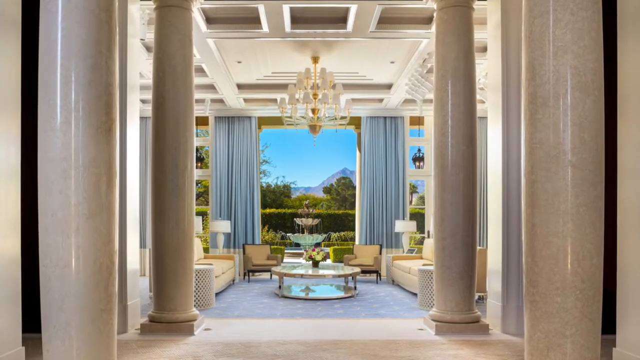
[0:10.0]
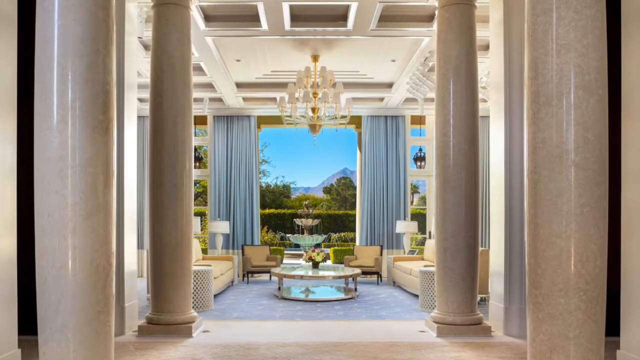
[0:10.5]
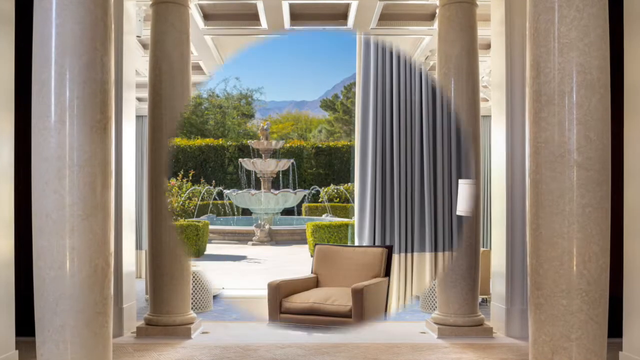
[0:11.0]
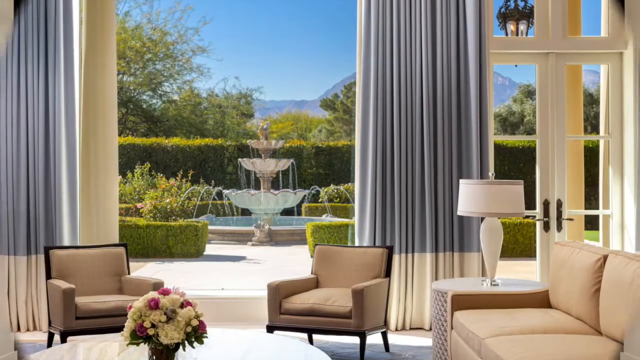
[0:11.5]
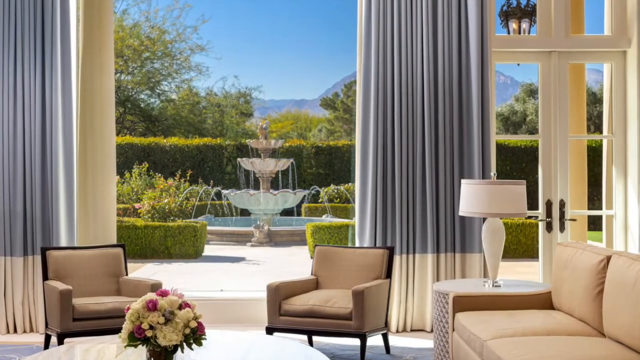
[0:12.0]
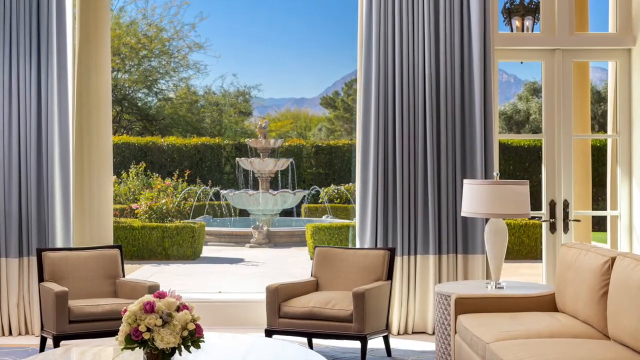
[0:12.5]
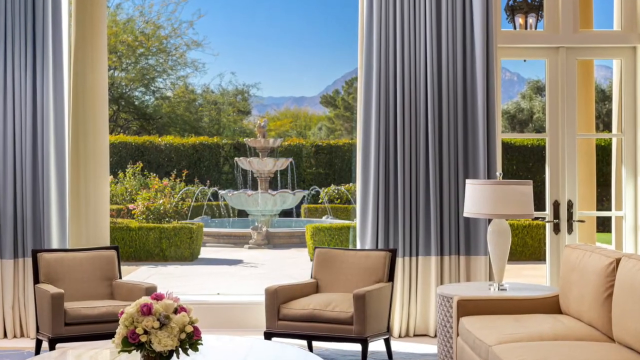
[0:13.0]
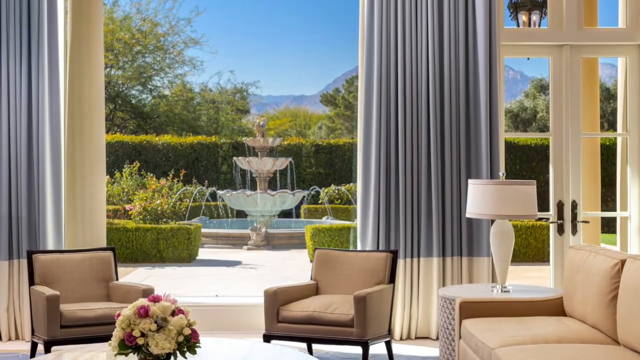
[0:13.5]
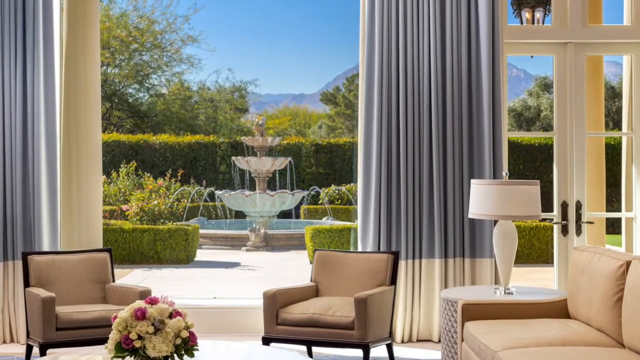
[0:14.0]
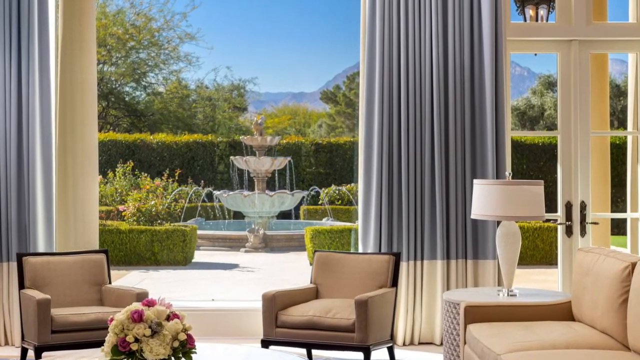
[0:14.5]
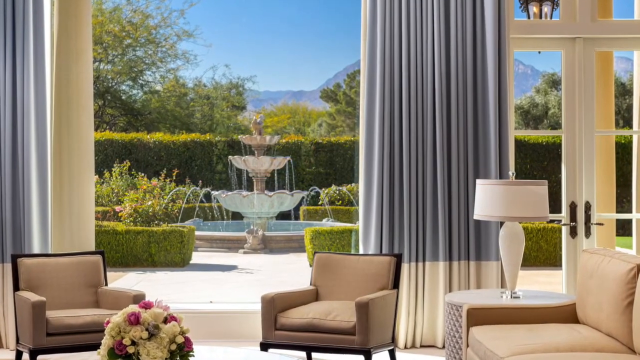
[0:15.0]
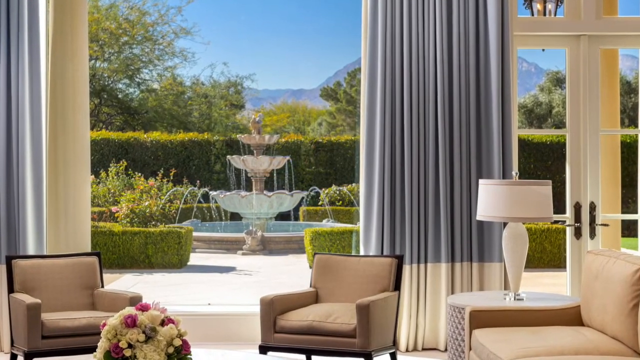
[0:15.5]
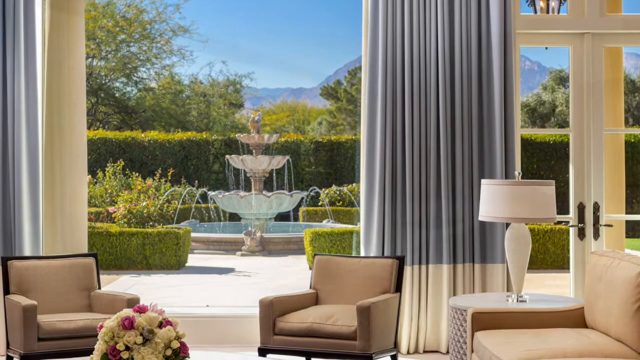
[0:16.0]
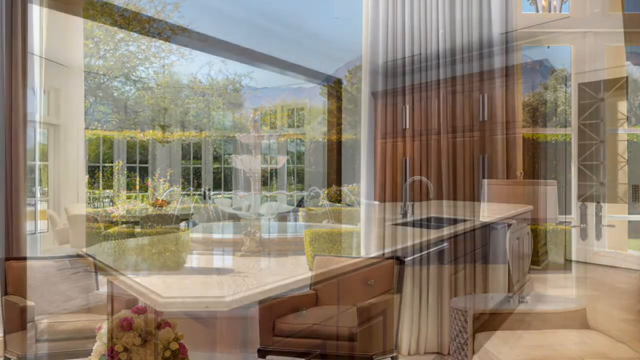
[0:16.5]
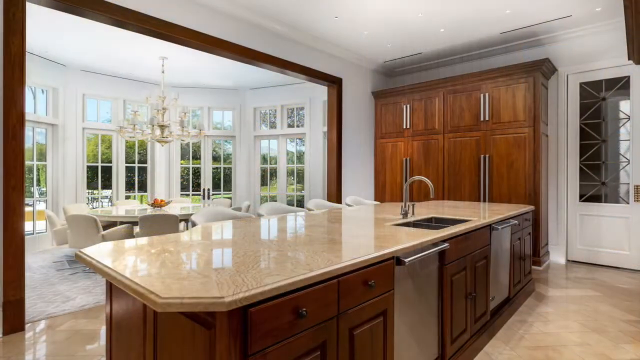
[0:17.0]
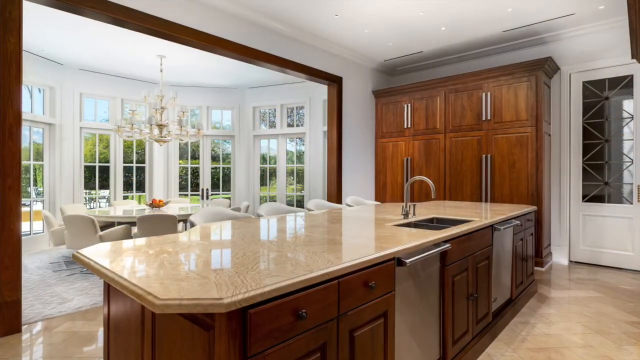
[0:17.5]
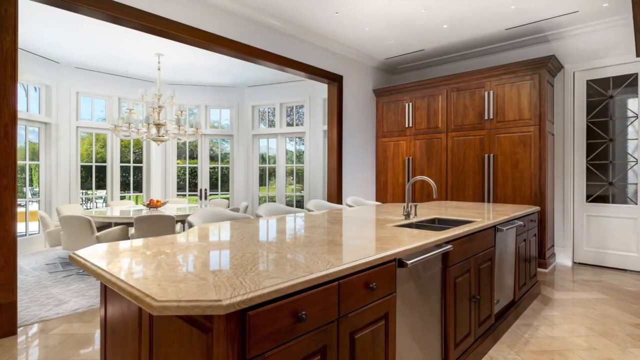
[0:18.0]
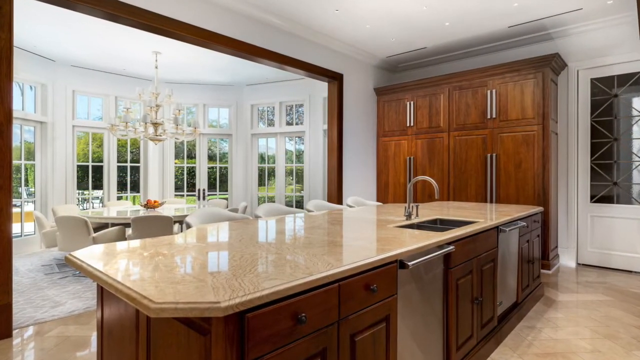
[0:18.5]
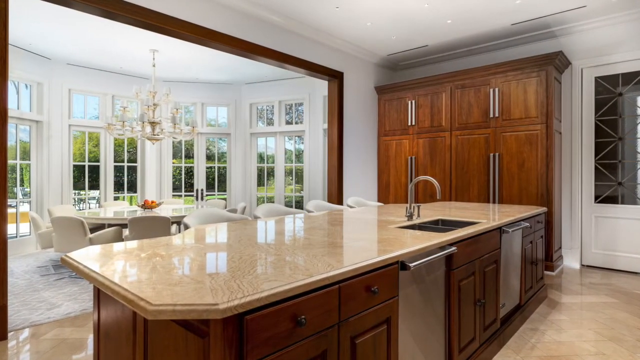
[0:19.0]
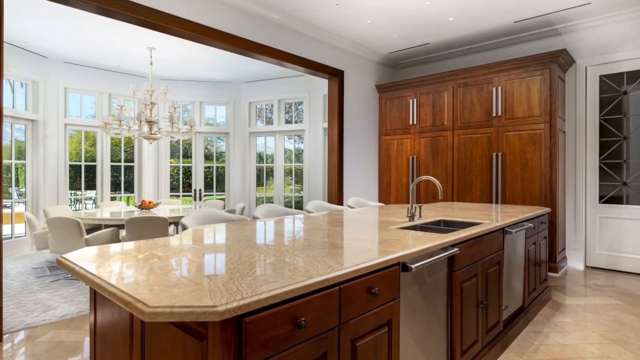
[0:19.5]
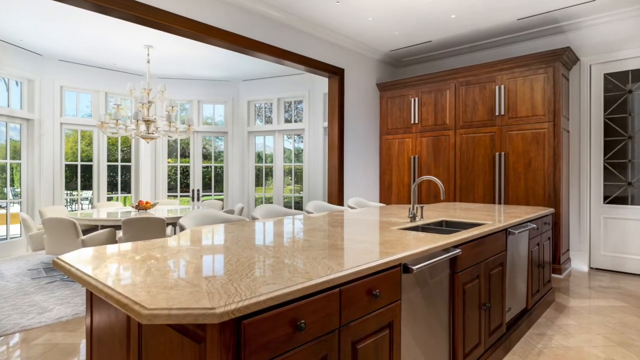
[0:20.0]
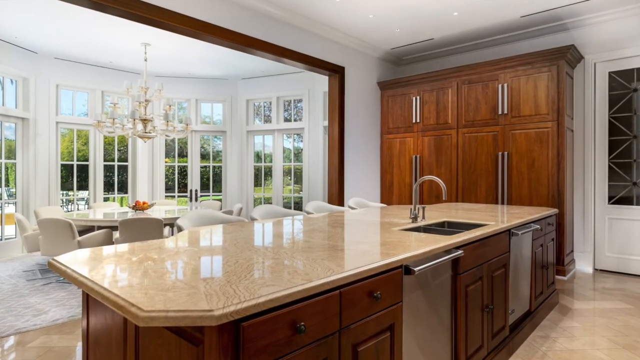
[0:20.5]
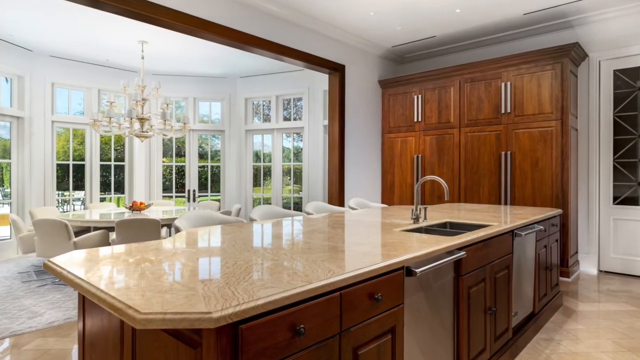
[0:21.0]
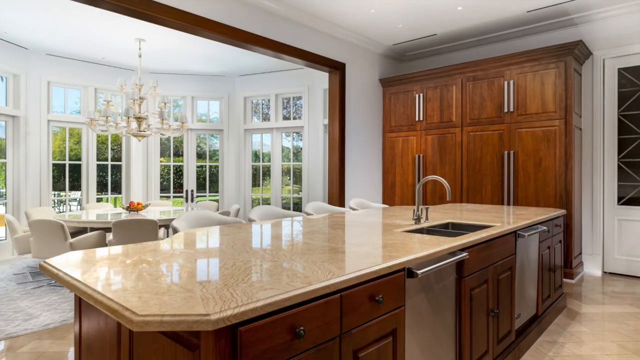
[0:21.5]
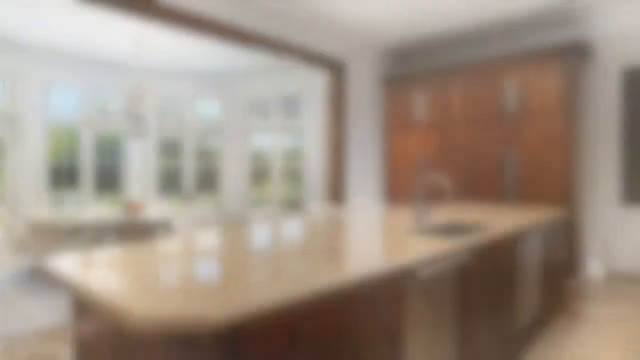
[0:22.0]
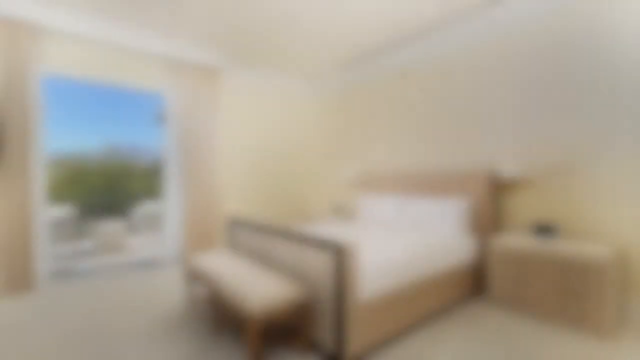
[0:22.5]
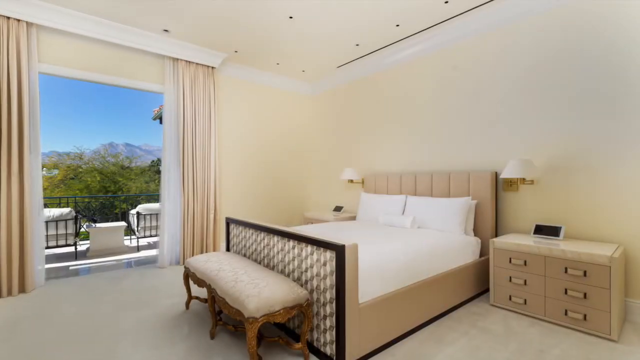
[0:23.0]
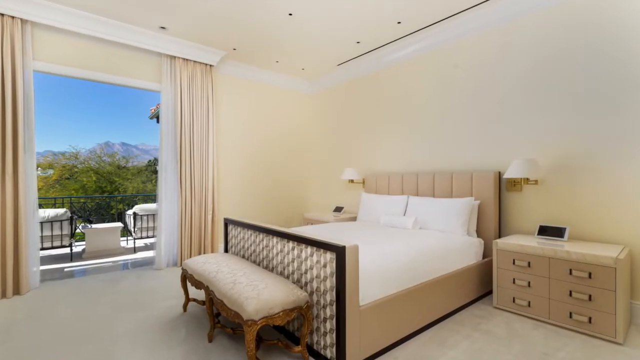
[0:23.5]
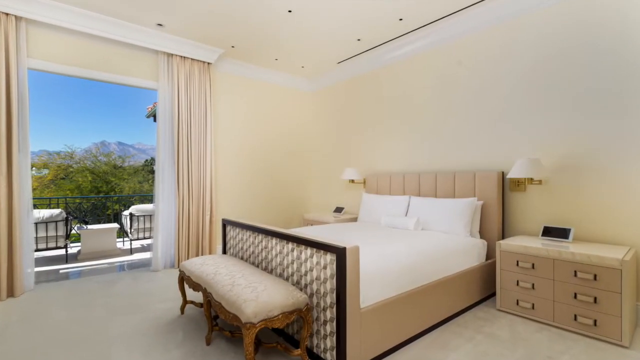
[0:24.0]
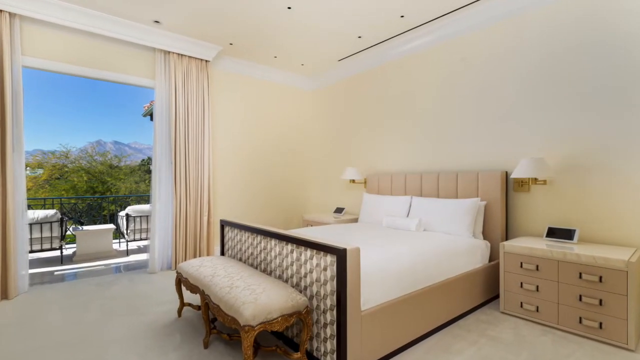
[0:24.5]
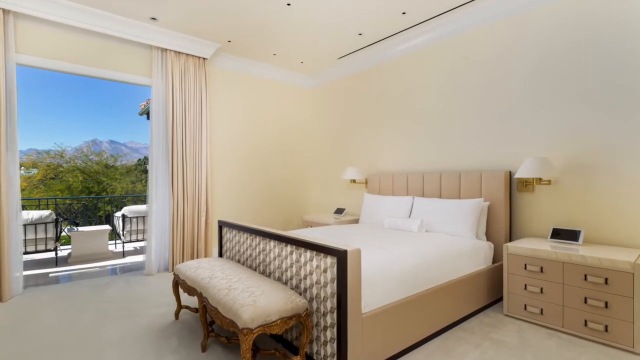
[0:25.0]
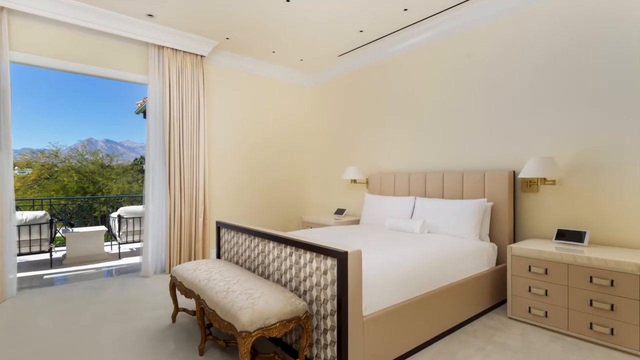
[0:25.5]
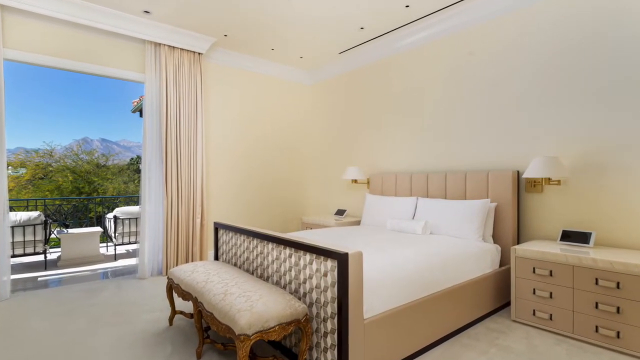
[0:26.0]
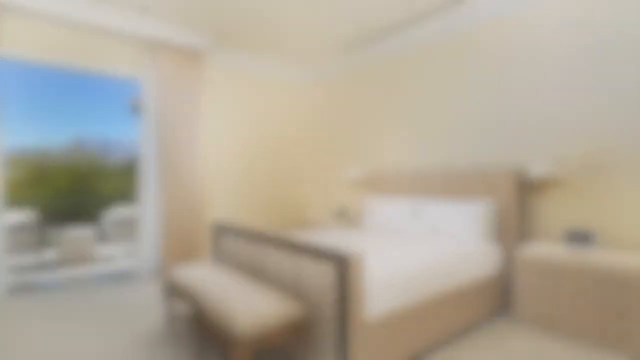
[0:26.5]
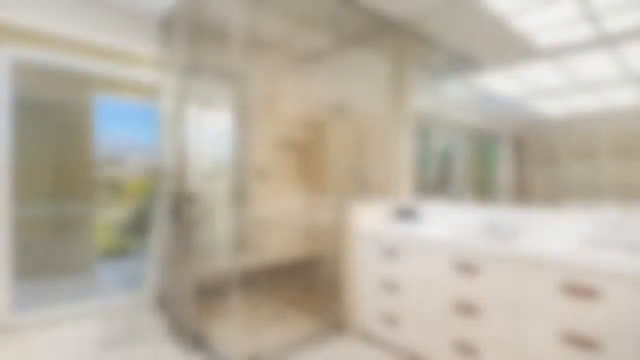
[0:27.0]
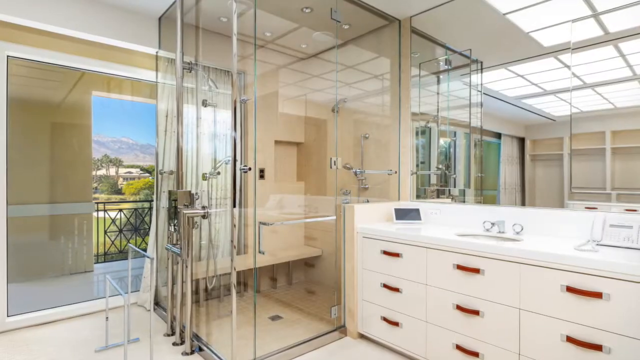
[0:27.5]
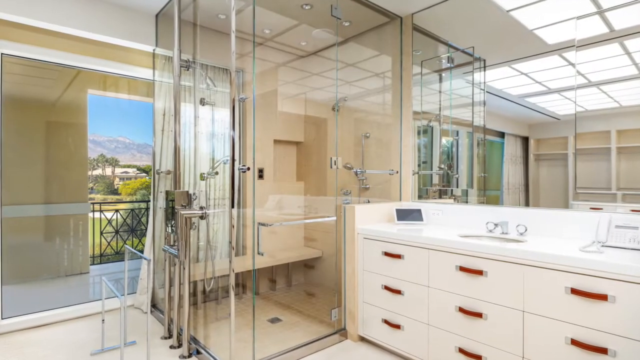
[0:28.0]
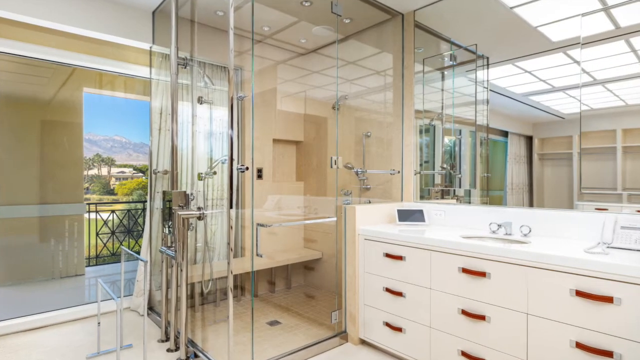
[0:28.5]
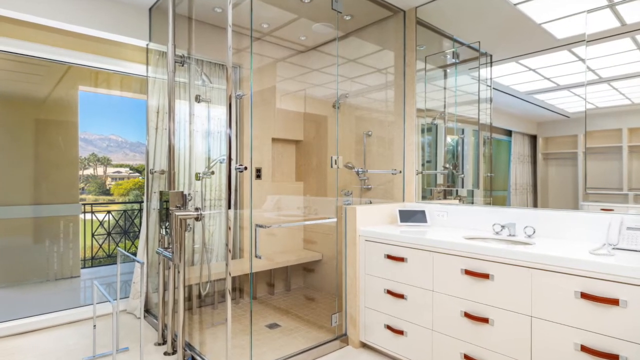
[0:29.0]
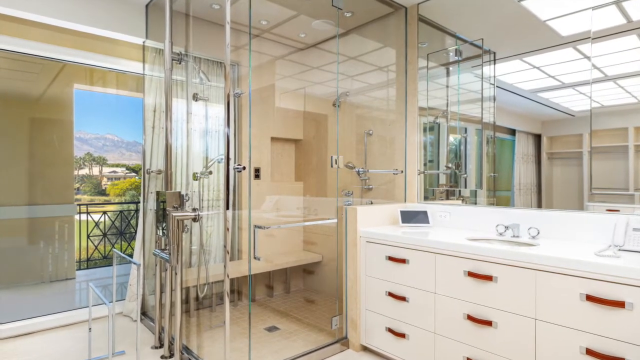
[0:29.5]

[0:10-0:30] The camera continues to zoom through a sitting area with elegant interior design, chairs and a round table with a beige lamp. On the right are multi-pane, French-style doors with dark brass hardware. Through the upper windows of the French doors an outdoor lamp fixture is visible, a candelabra-looking fixture with a wrought iron frame. Outside there is a manicured hedge and a three-story shell-shaped fountain above a pool underneath, in a manicured, elegant patio, as the camera moves through the open door draperies. A glimpse of the kitchen follows: a dining cove at the back with a semi-circular design, French doors with upper windows and a large candelabra. The kitchen has four bar stools with cushioned backs and a large circular table beyond with cushioned chairs. There is a large cabinet to the right of a cooking prep area with a beige top, and two stainless steel dishwashers at the base of the sink area. In the distance, against a light-colored wall, is a storage larder, a wooden pantry area for dry goods. The tile floor is polished. The camera then zooms into a bedroom with beige walls and curtains that open to a terrace overlooking mountains in the distance. The bed has a padded headboard and a padded raised footboard, with a matching cabinet dresser and a wide ottoman at the base of the bed. A bathroom follows, with dual white sinks and a countertop with white doors, white drawers and color-coordinated drawer pulls. A touch pad screen is on the countertop of the sink area. The shower has a clear glass door and clear glass walls, wall nozzles and ceiling nozzles, flexible stainless hoses with nozzles, and a built-in seating area similar to a steam room. The bath area also has a walkout to a terrace with a wrought iron railing.